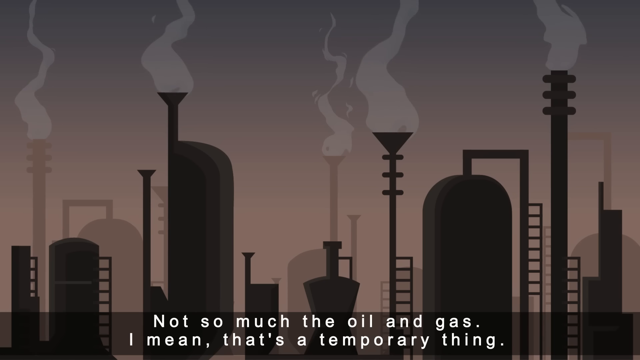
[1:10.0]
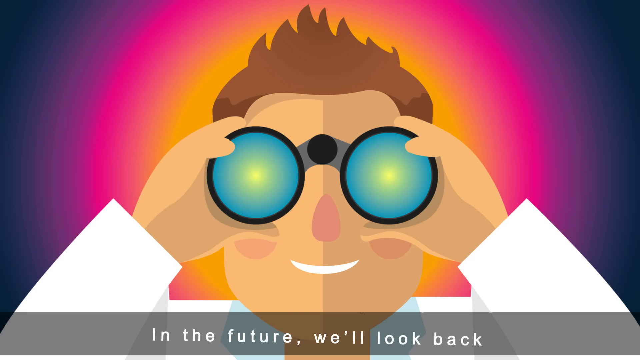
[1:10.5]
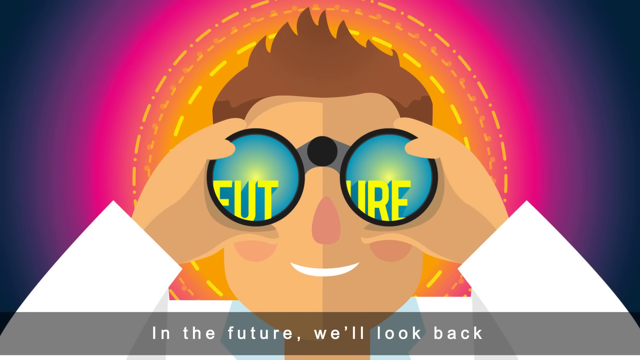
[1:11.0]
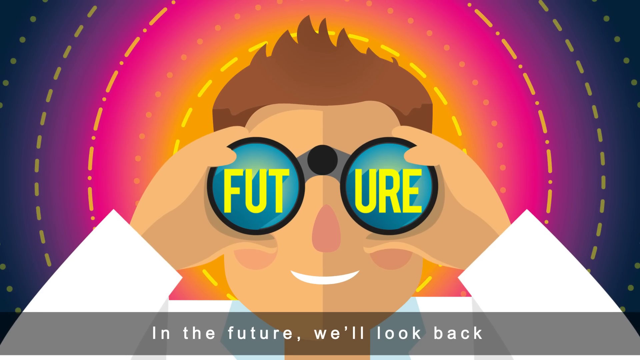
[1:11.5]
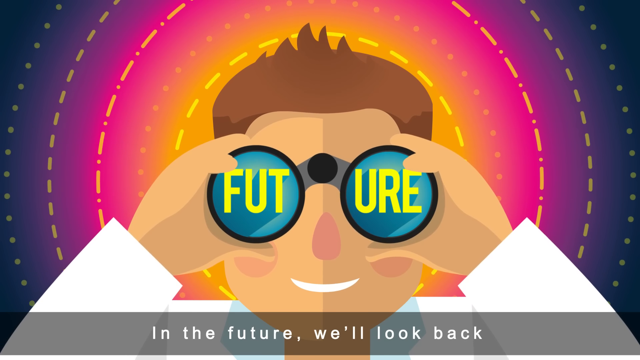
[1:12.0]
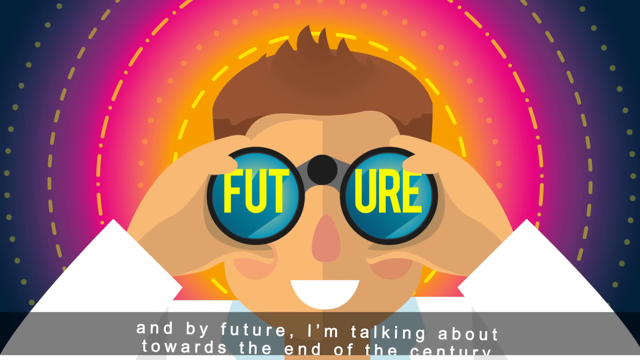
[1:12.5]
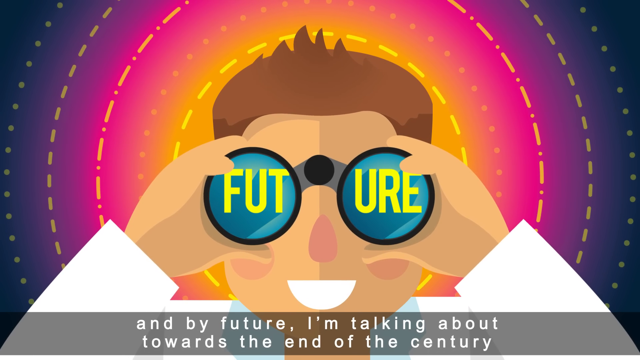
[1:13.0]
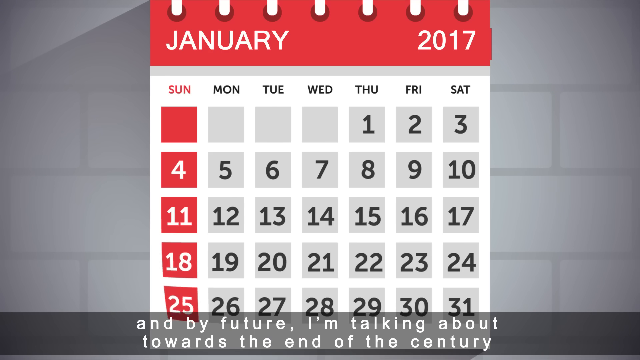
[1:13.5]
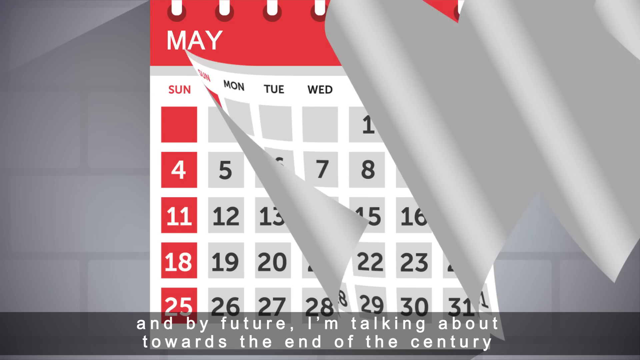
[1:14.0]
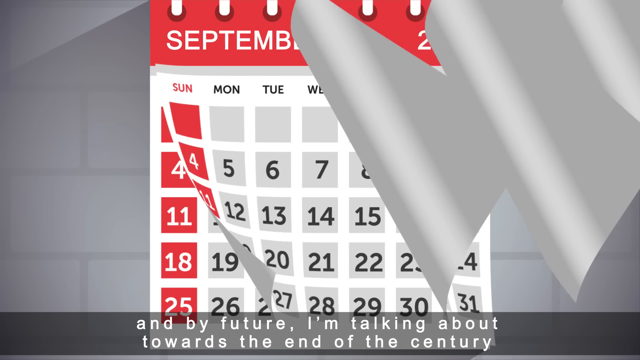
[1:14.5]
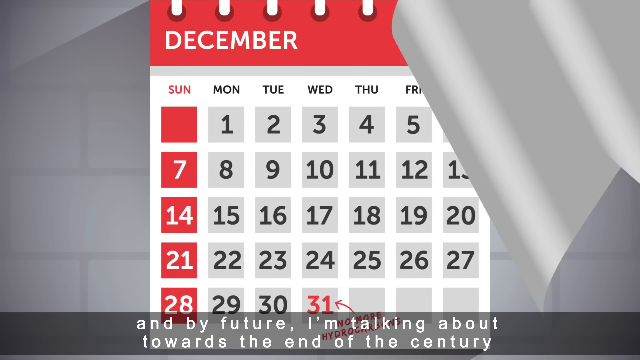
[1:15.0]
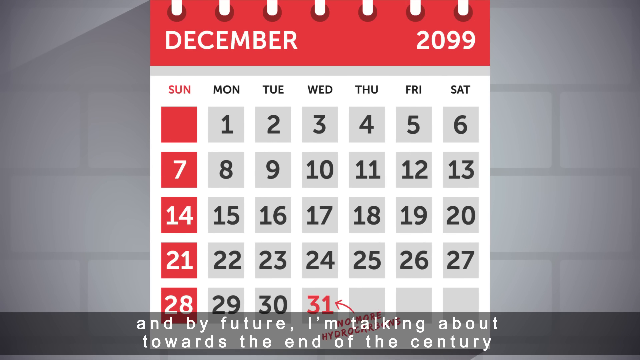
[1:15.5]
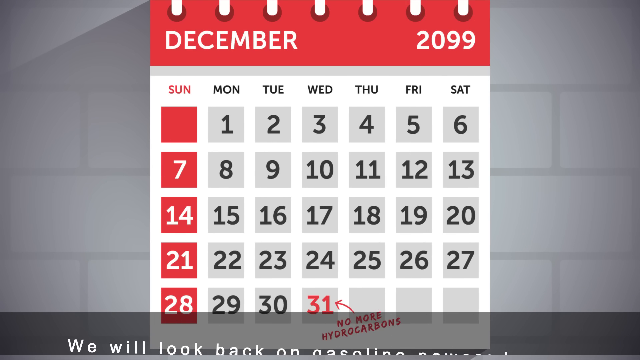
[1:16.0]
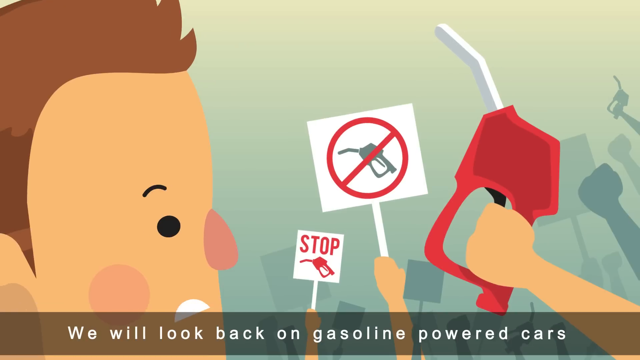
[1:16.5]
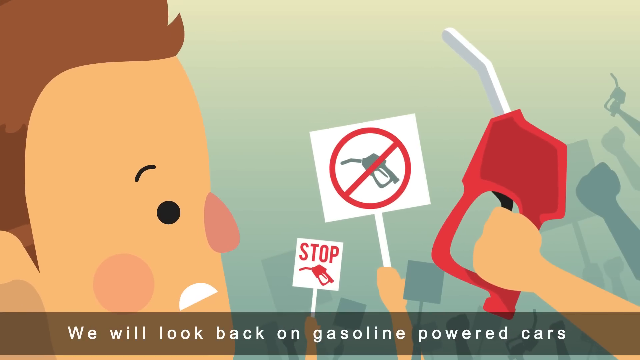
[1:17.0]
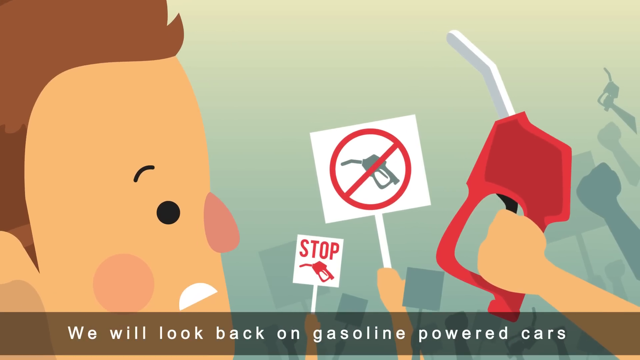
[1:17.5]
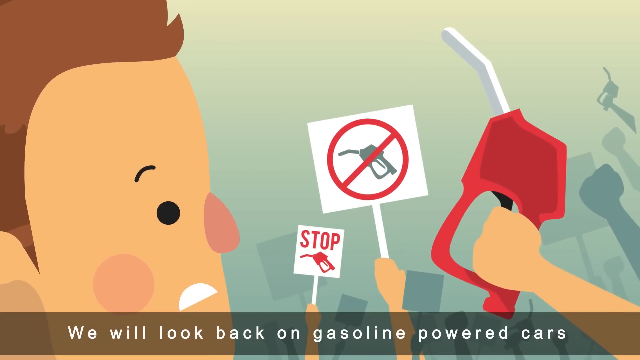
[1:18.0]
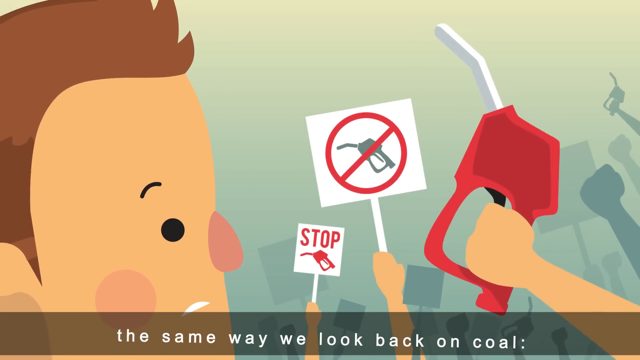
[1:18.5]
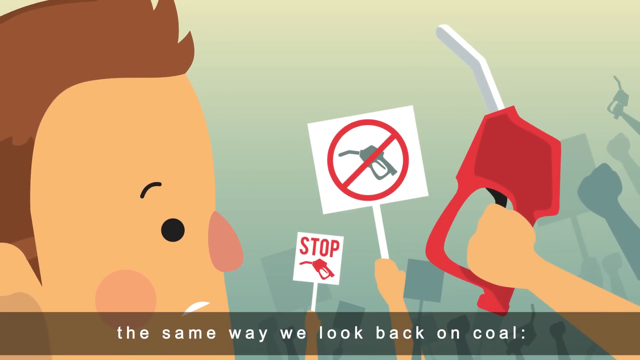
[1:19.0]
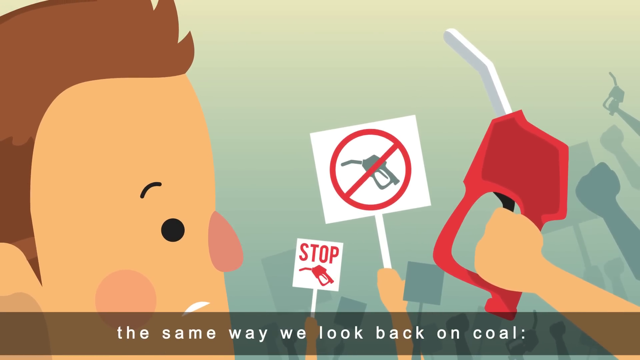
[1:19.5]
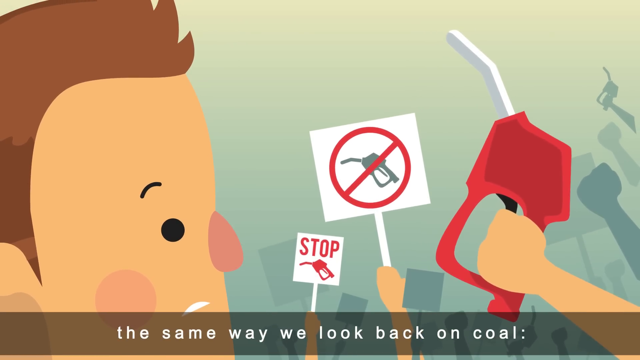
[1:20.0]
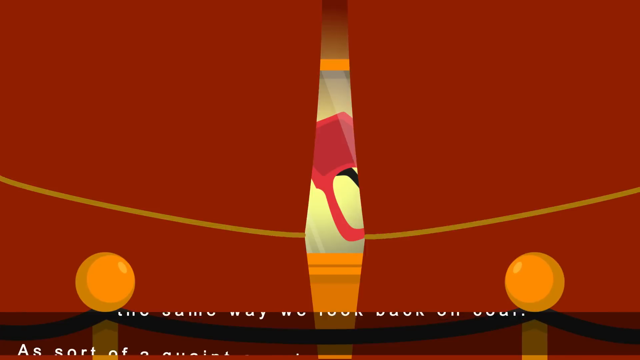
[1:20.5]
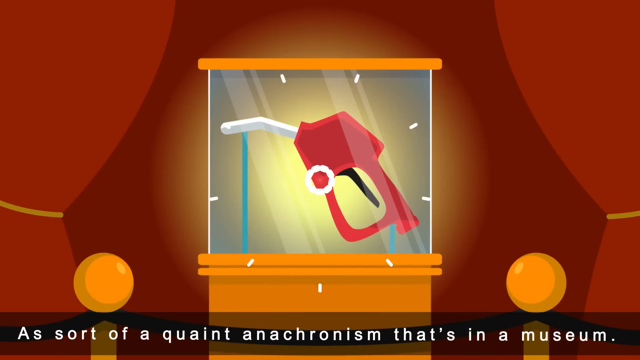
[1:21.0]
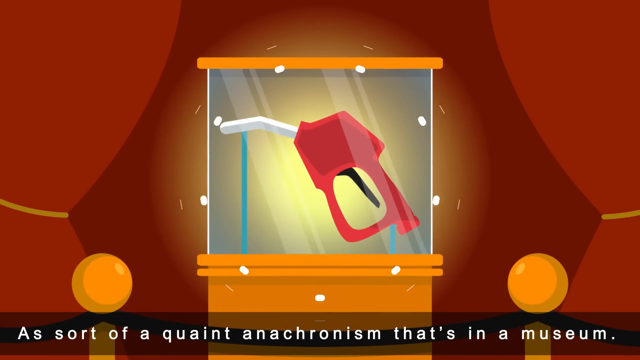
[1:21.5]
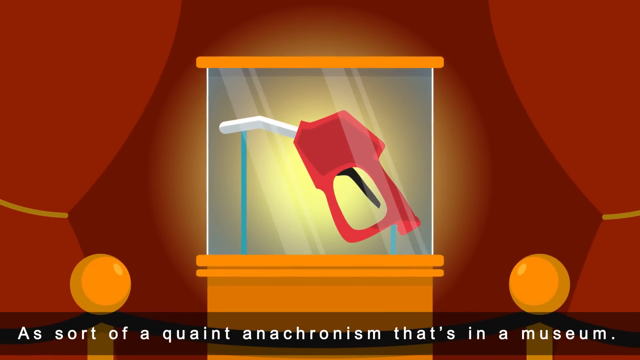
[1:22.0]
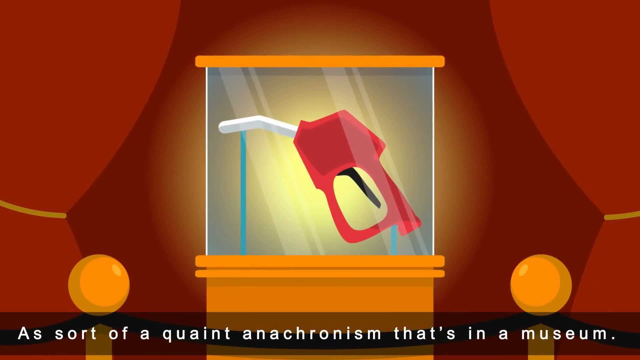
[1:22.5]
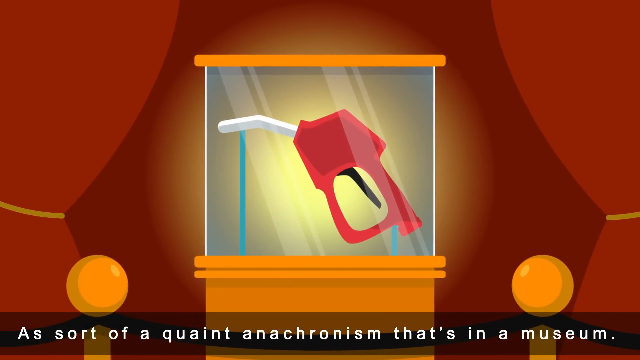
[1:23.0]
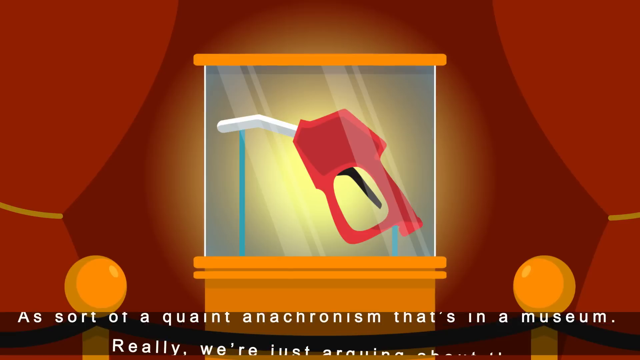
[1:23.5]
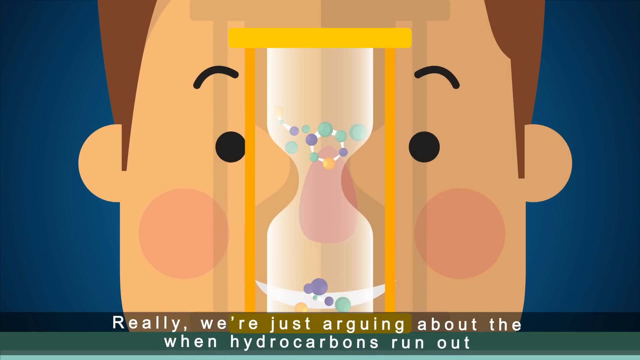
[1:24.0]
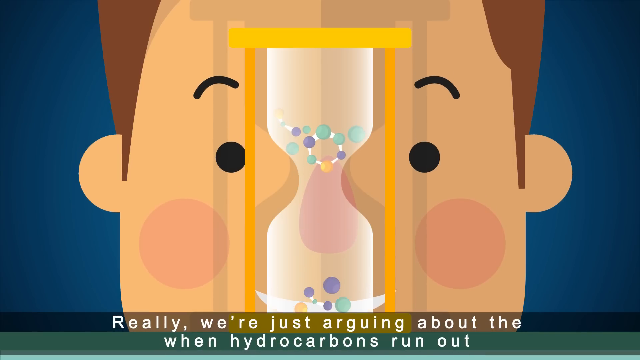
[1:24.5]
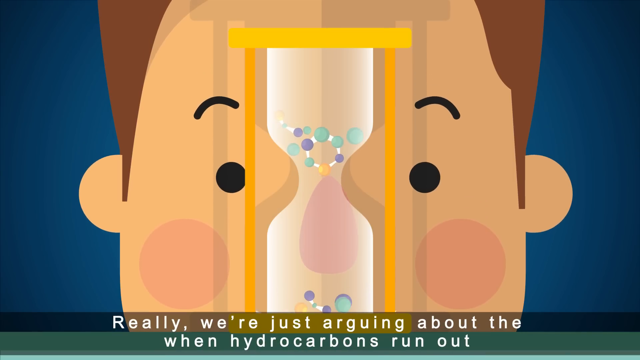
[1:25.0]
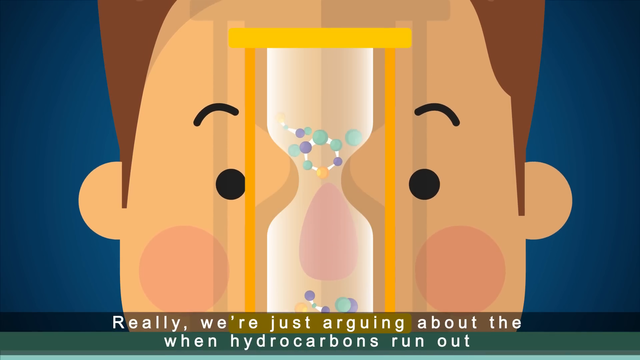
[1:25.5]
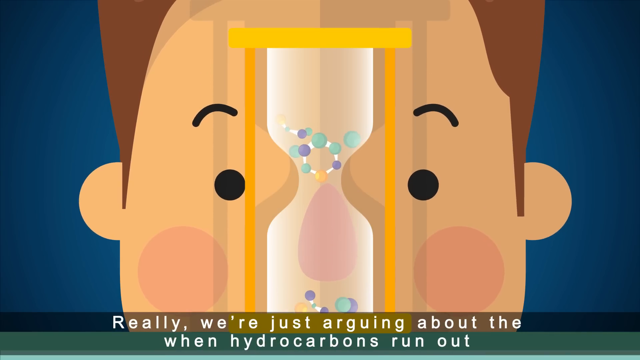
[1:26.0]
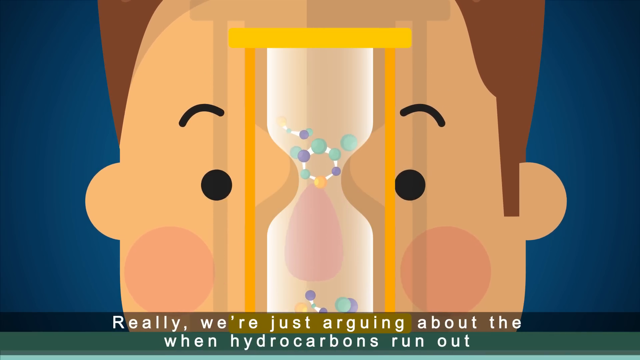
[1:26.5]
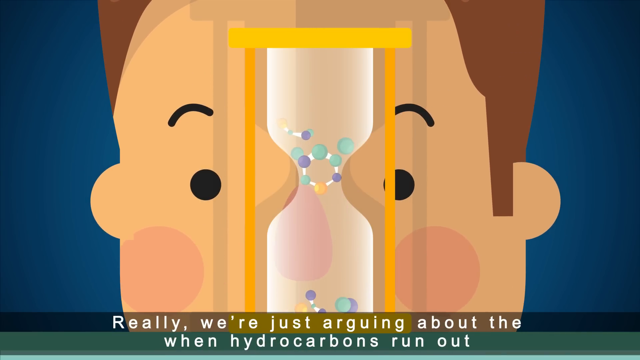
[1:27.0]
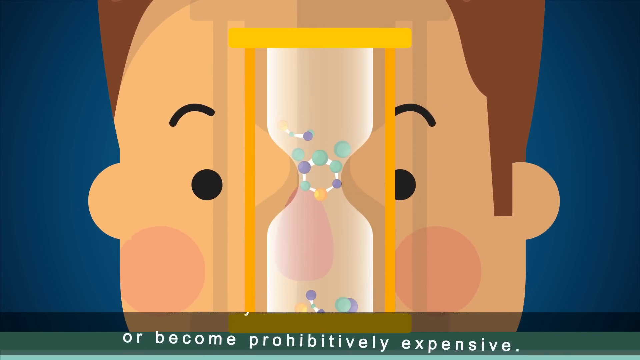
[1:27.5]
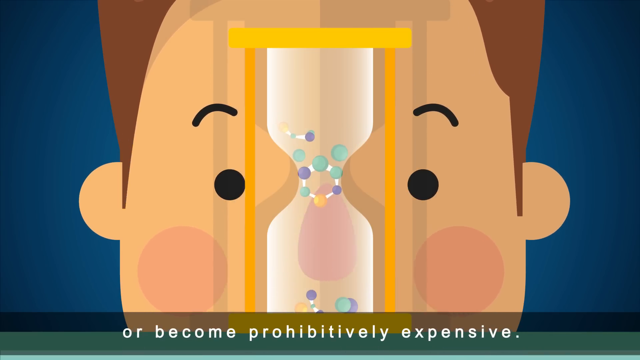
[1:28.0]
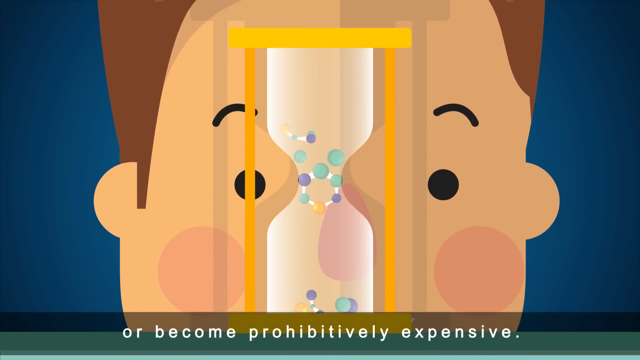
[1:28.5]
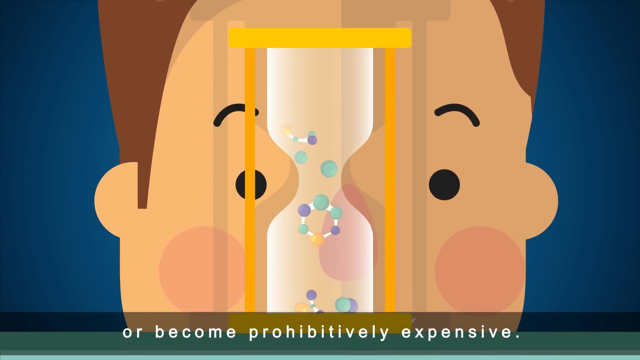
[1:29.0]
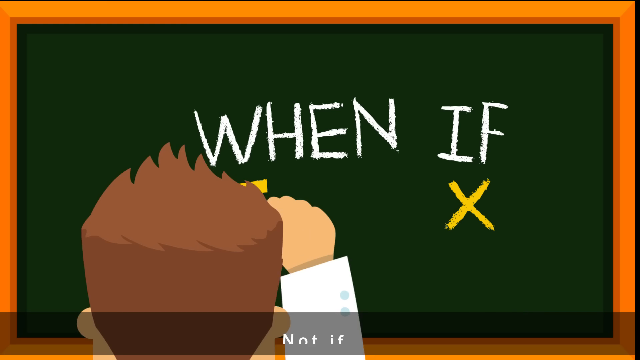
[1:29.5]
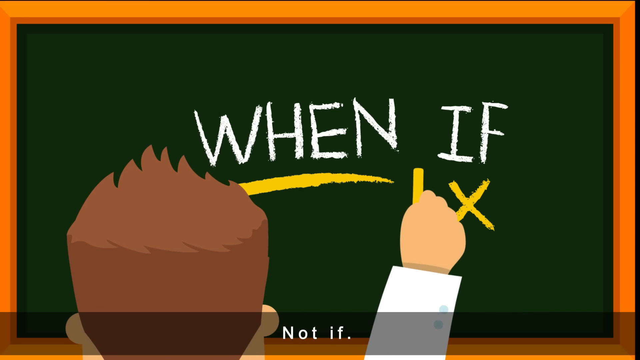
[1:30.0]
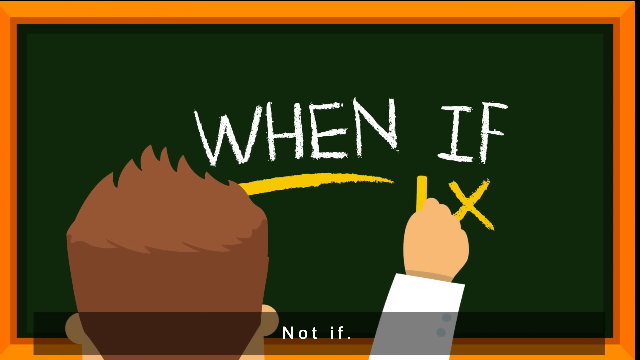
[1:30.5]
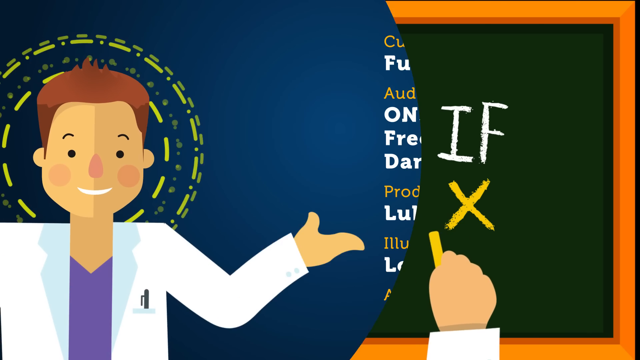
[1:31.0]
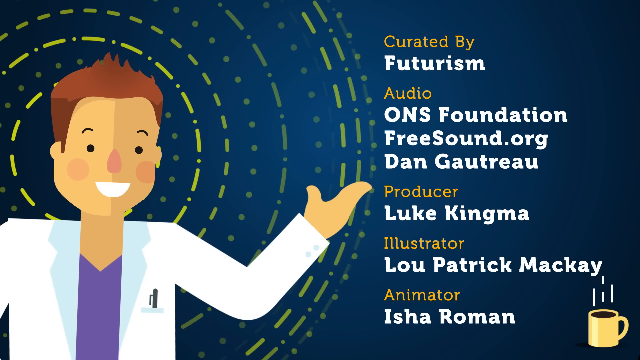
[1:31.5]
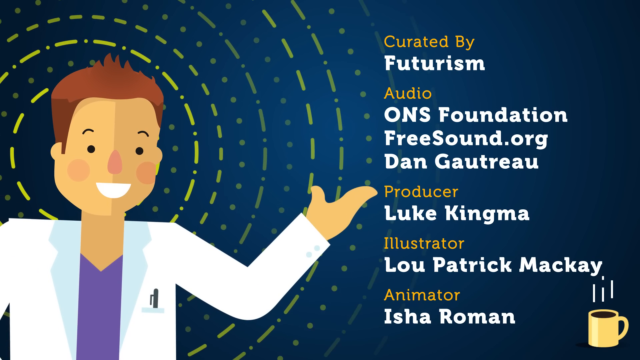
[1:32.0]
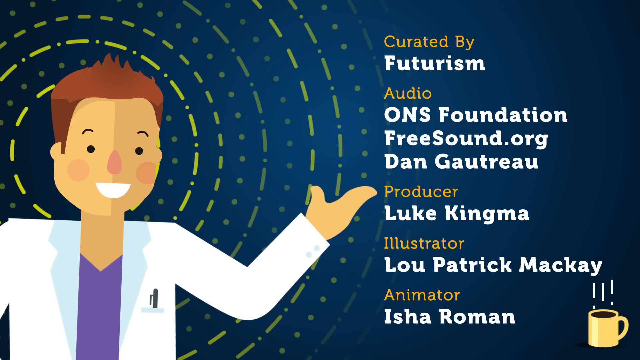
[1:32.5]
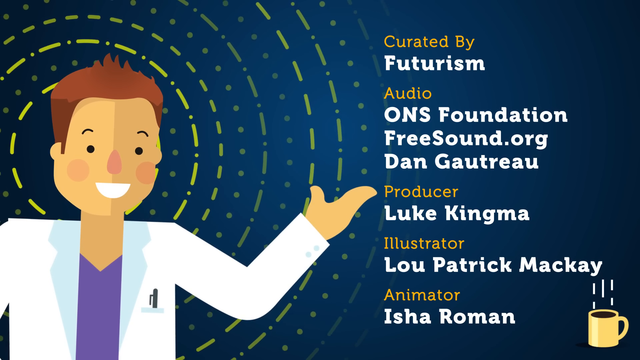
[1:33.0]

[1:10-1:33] It appears to be nighttime, judging by the background. Lots of manufacturing or large-scale production machinery for processing goods covers the entire screen. Some of the machinery has something like a chimney with smoke rising out of it, and the items look like what would typically be found in an industrial park or industrial area of a city. Toward the bottom of the screen are the words "not so much the oil and gas." Next, Elon Musk appears, apparently looking into a pair of binoculars, with the word "future" written across the lenses: "FUT" on the left lens and "URE" on the right lens. A rainbow-colored aura behind him is moving. He wears his white lab coat, holds each side of the binoculars in the palms of his hands, and smiles. Next, a flip calendar is shown, with all of its pages flipping away in an animated motion until it reaches a page that shows "December 2099"; the background is a gray brick wall. Then Elon appears in the left corner of the frame, with a person holding a gas nozzle in the foreground and a silhouette of hands, including a hand holding a gas nozzle, in the background on the left side. People are holding signs: one says "stop" and has a gas nozzle on it, and another has an X over a gas nozzle. It appears that people are protesting against the excessive use of gas. Next, a gas nozzle is inside a glass display case that looks like it has orange wood at the top and bottom, and the display case looks like it is on a stage. Then there is a close-up view of Elon's face with an animated hourglass in front of it, with little beads dropping down through the hourglass. Next, it looks like Elon is in a classroom, seen from behind, showing the back of his head, with the words "when, if" written on the green board. Finally, a screen shows Elon smiling with his arm bent at the elbow and outstretched, his palm outstretched. Words are written on the right side of the screen: "curated by Futurism Audio, ONS Foundation," underneath that "freesound.org," beneath that "Dan Gautreaux," underneath that the word "producer," under that "Luke Kingma," underneath that "illustrator Lou Patrick McKay," and underneath that "animator Isha Roman."